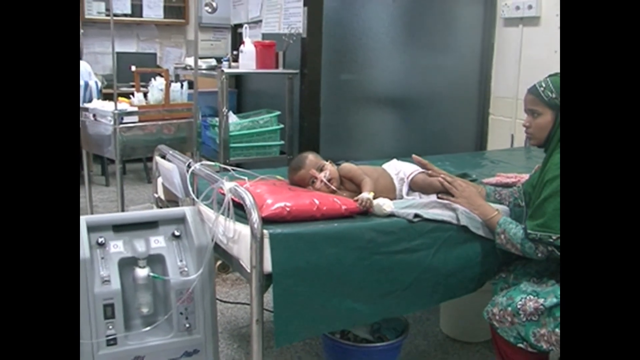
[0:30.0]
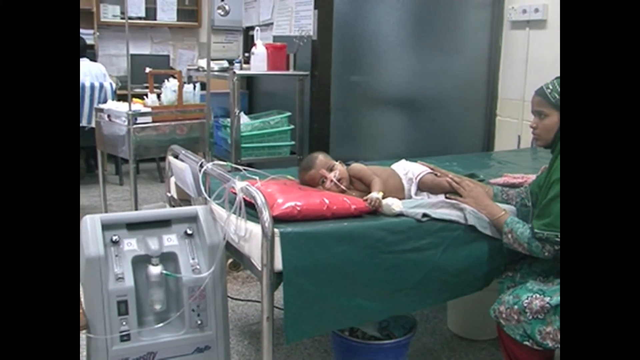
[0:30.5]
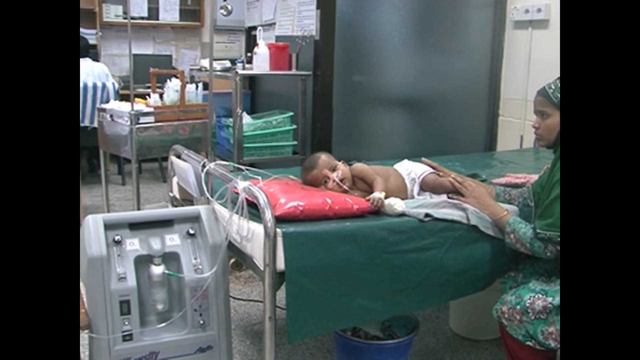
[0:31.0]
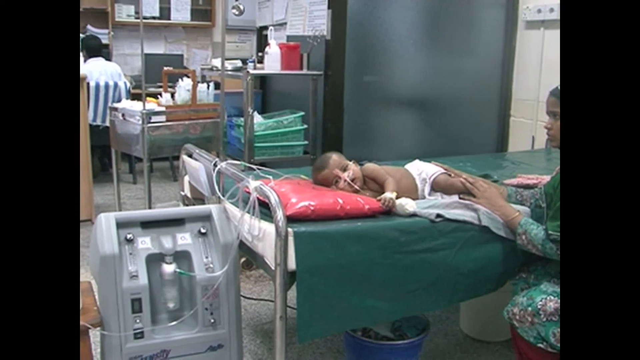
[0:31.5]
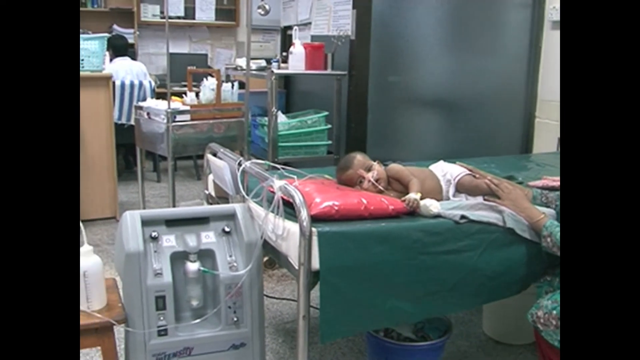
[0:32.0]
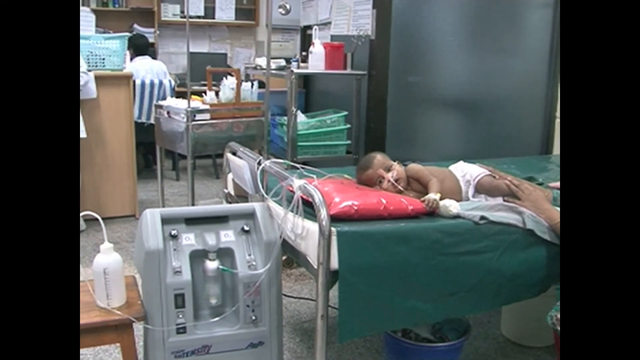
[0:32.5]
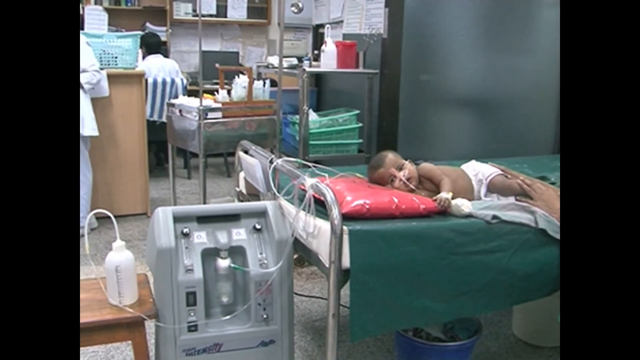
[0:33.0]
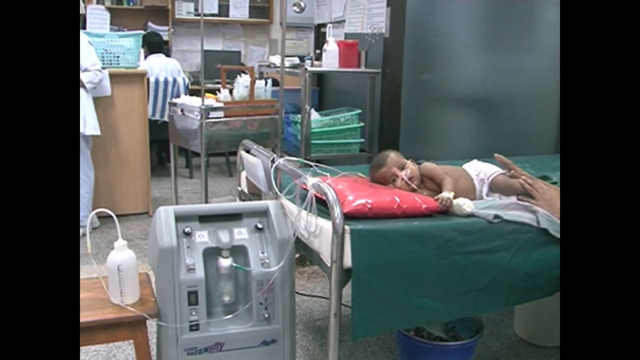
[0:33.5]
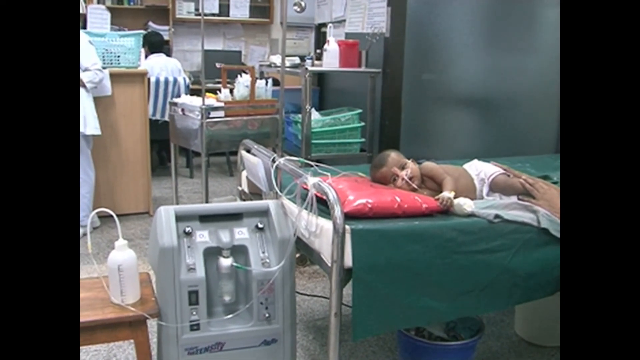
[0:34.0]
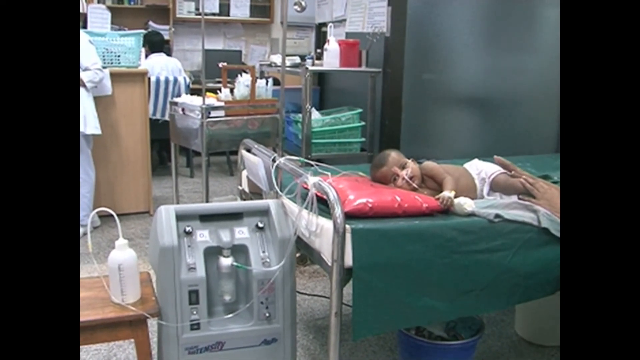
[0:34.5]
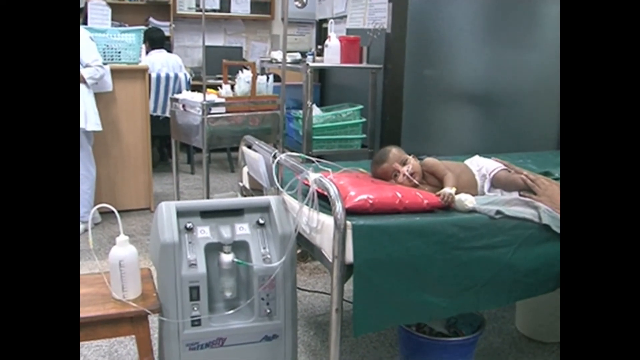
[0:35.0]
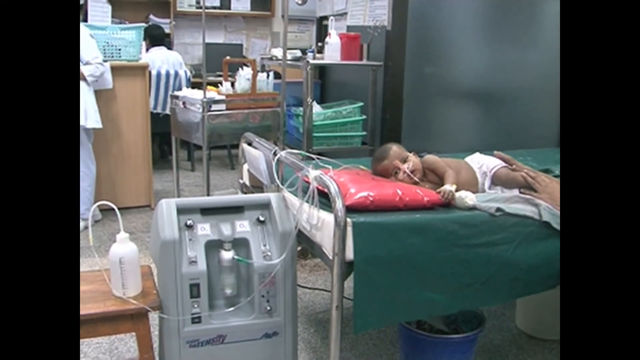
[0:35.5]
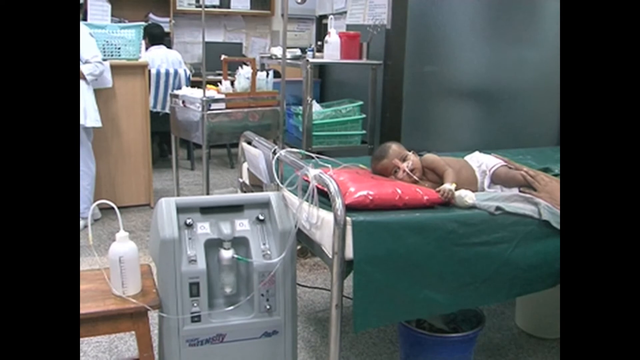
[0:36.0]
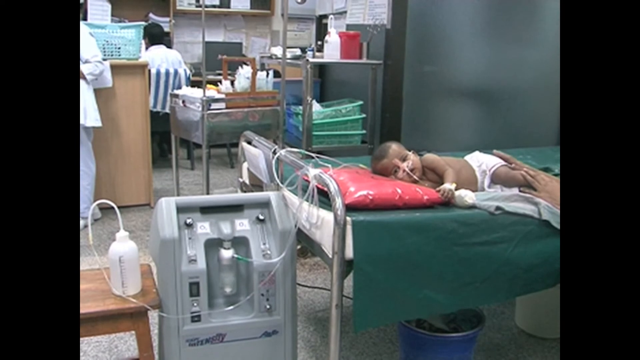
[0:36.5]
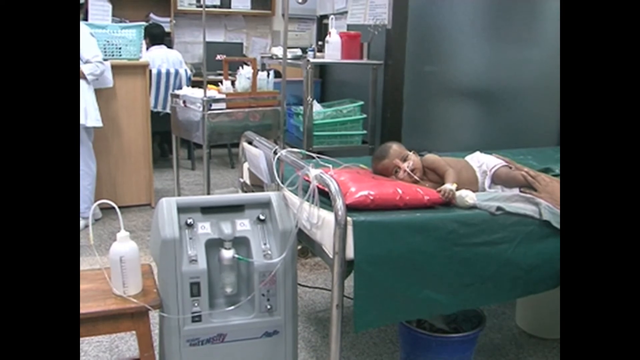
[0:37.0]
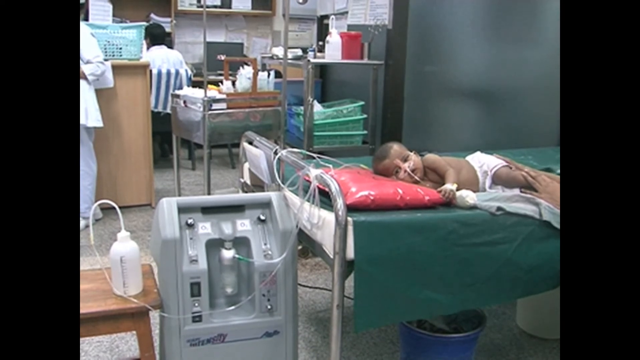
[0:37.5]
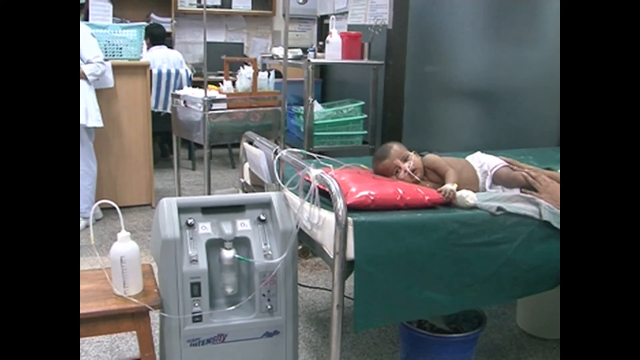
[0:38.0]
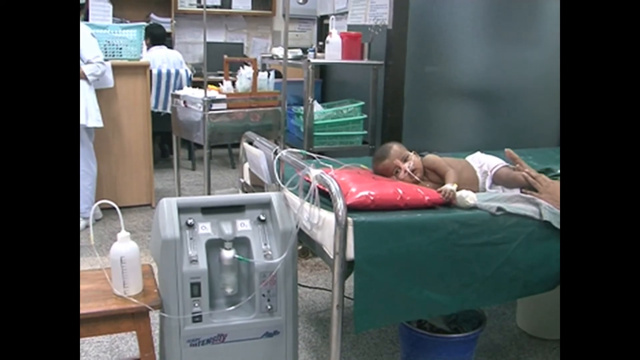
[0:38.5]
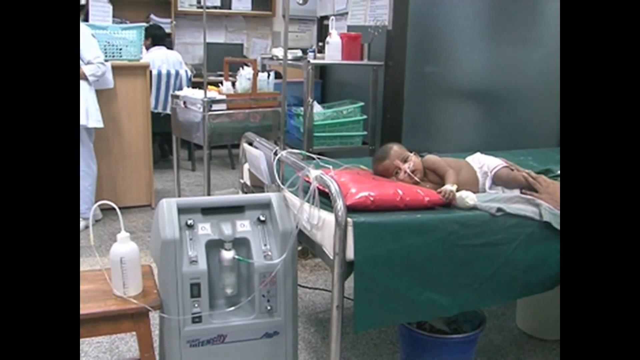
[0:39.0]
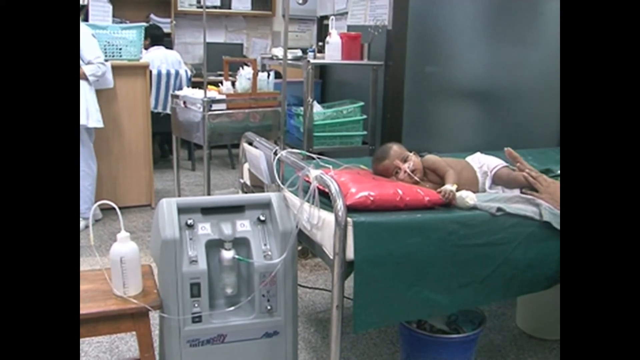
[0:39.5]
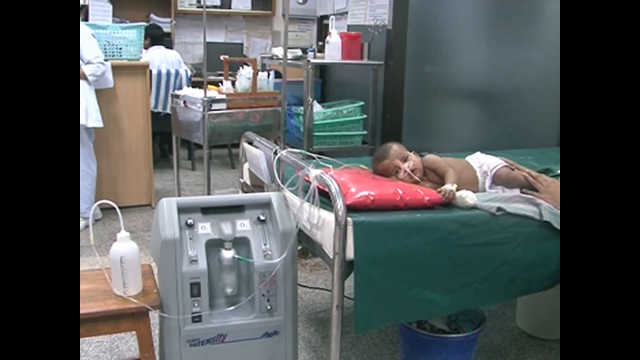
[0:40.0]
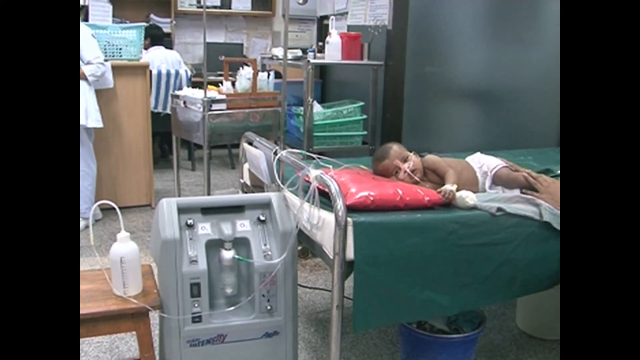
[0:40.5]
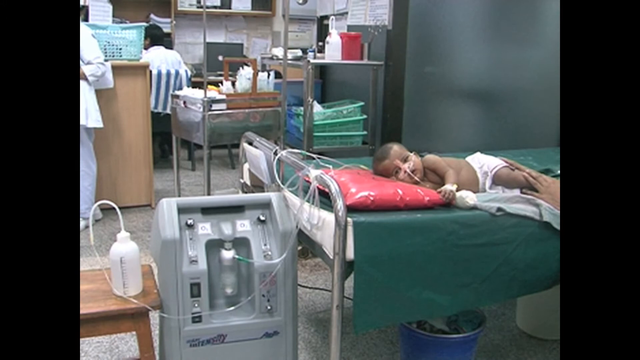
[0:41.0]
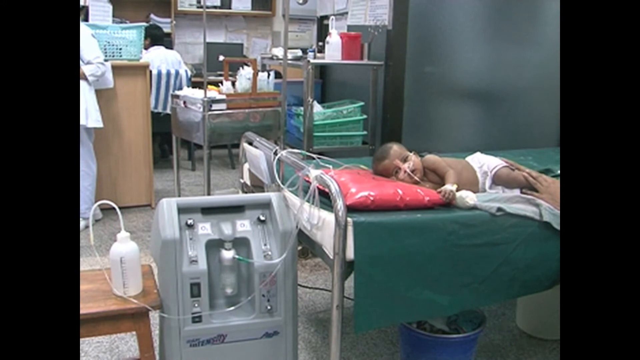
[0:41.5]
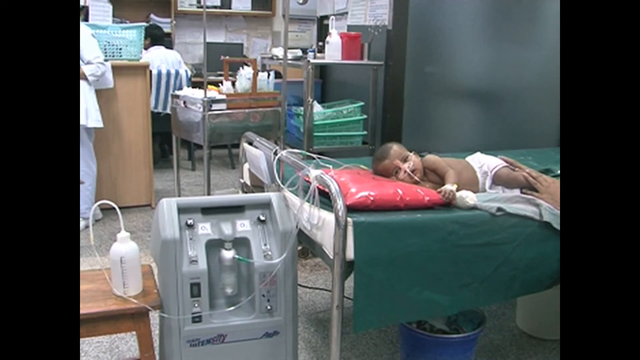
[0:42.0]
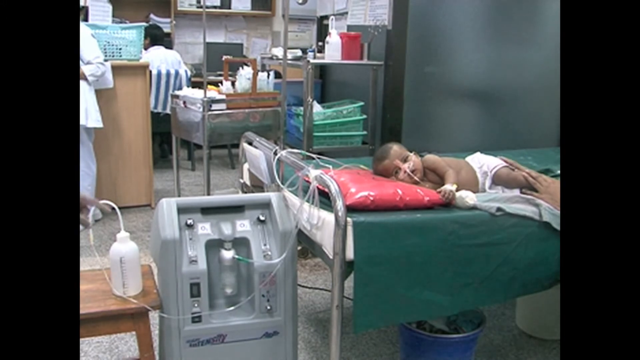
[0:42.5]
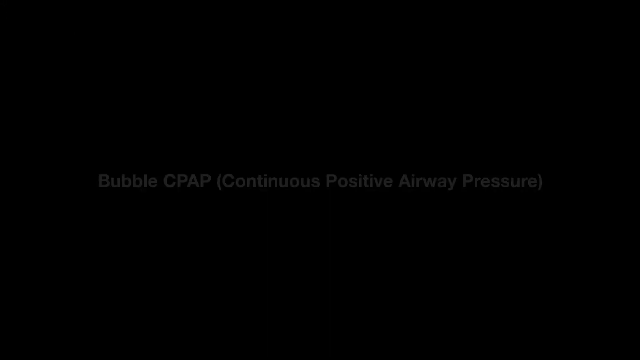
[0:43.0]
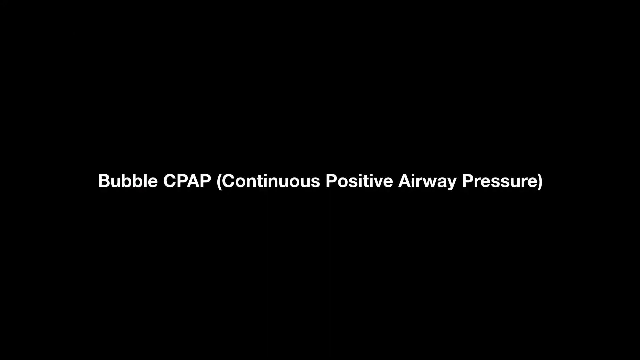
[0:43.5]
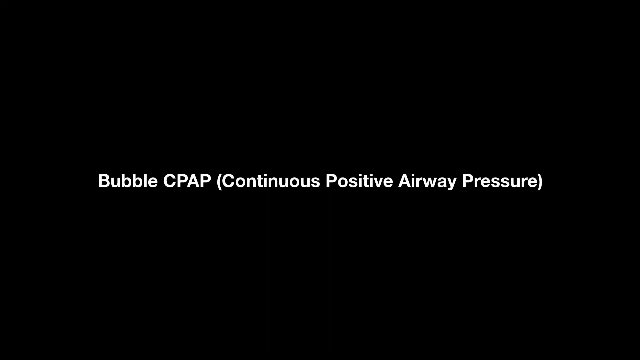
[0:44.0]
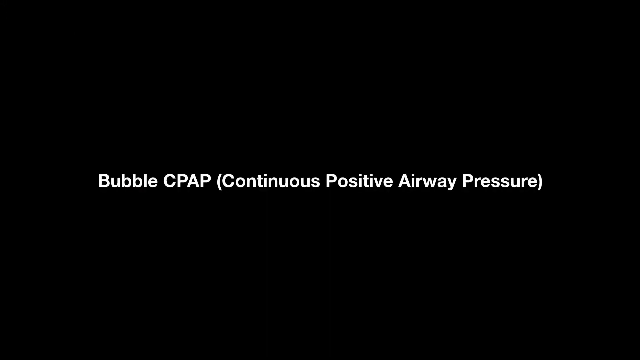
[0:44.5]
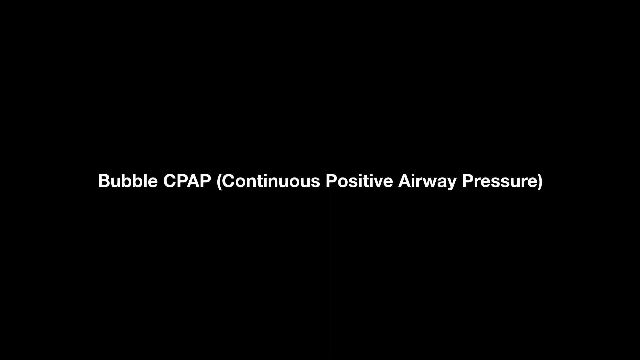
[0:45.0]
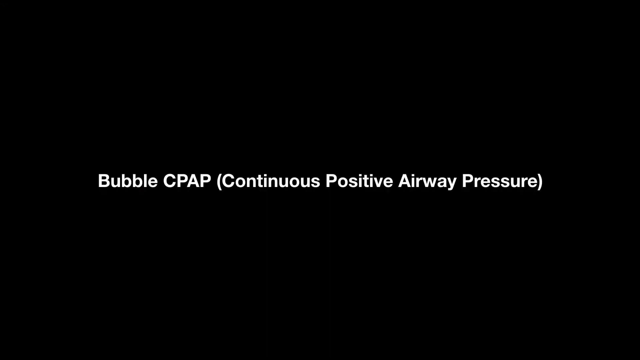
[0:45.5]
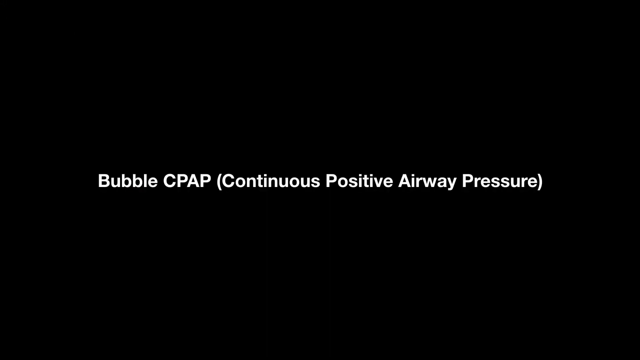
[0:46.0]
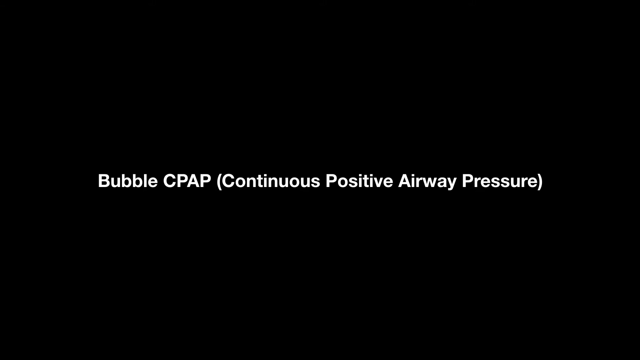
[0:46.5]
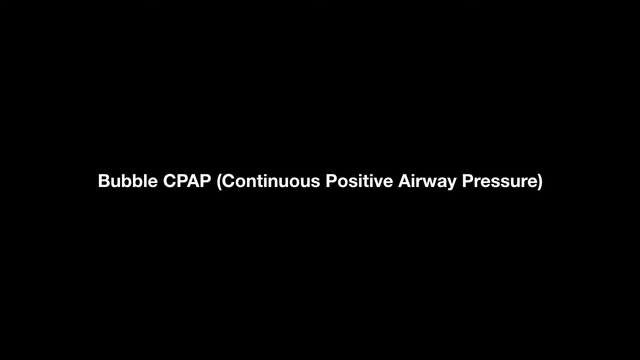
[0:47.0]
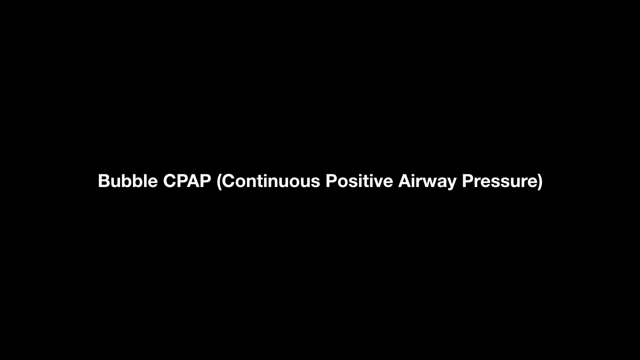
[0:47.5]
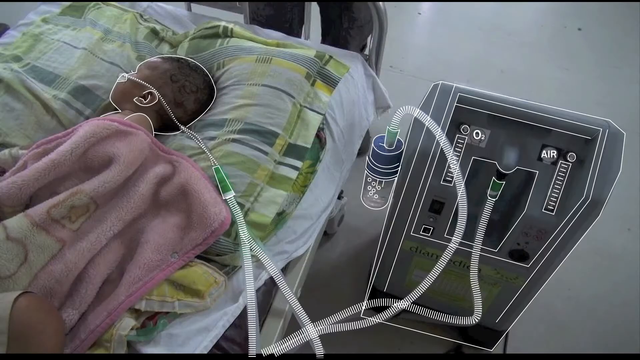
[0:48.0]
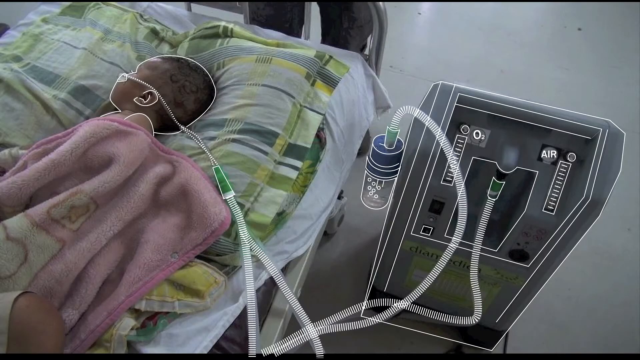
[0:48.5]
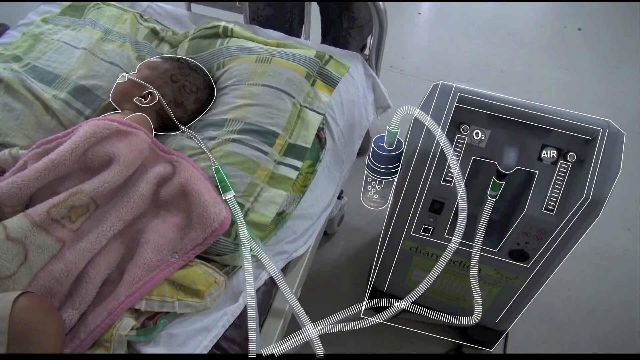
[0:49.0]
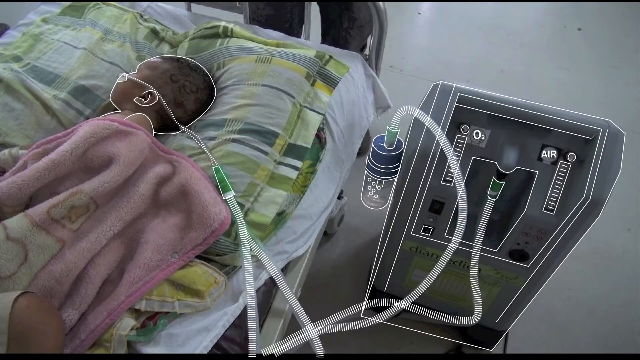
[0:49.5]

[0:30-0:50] The camera pans away from the baby on the bed, revealing in the background a doctor working at a desk on the left-hand side of the hospital room and another person standing on the left in a white overall uniform. The baby lying on the green bed is wired up to a machine: various wires come out of the baby's face and connect to a large machine on the floor at the end of the bed, and a bottle is connected via a tube to the baby's mouth. The woman sitting next to the bed continues to tap the baby in a comforting way. The video fades out to a black screen with white text reading "bubble CPAP (continuous positive airway pressure)". It then cuts to an illustration of a bed with a baby on it, the baby outlined in white and wired up to a large machine next to it that looks similar to the one attached to the baby in the footage.